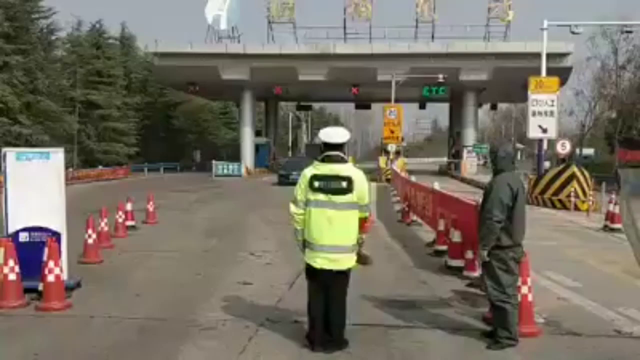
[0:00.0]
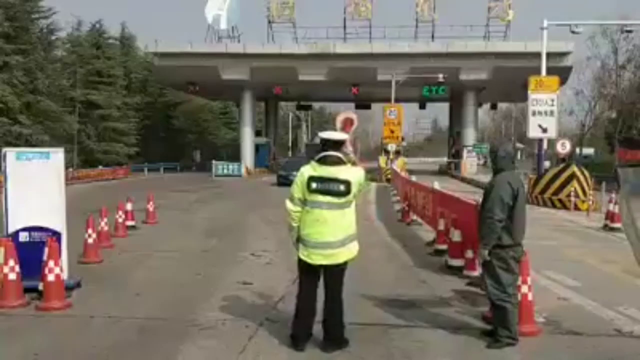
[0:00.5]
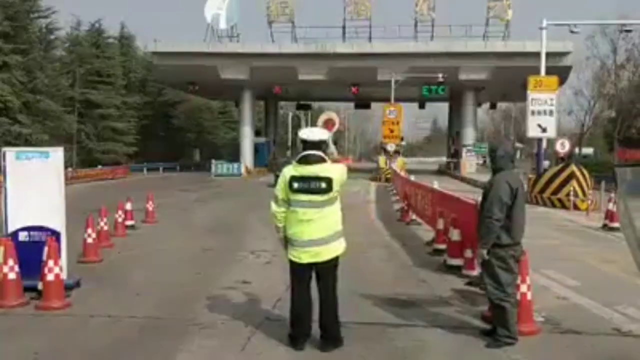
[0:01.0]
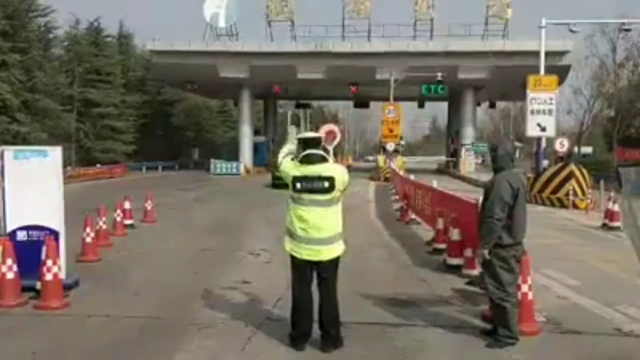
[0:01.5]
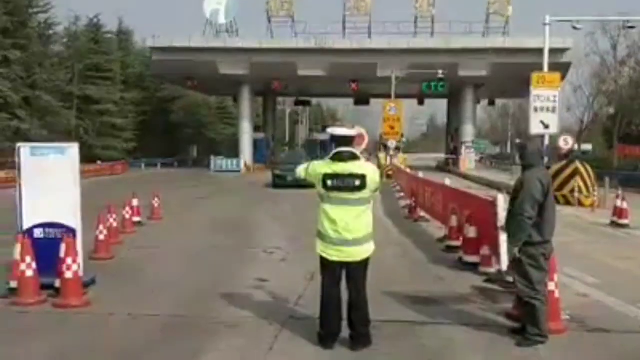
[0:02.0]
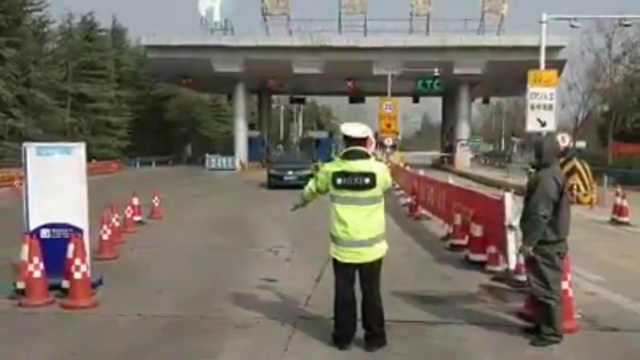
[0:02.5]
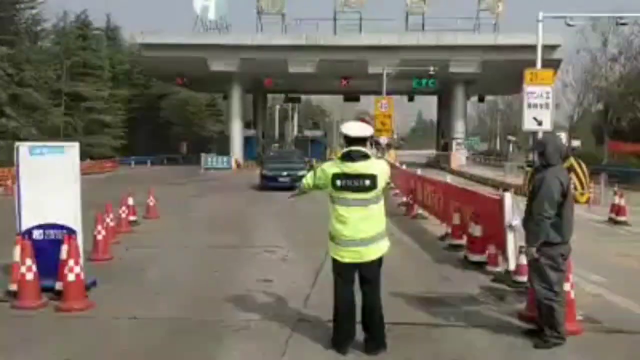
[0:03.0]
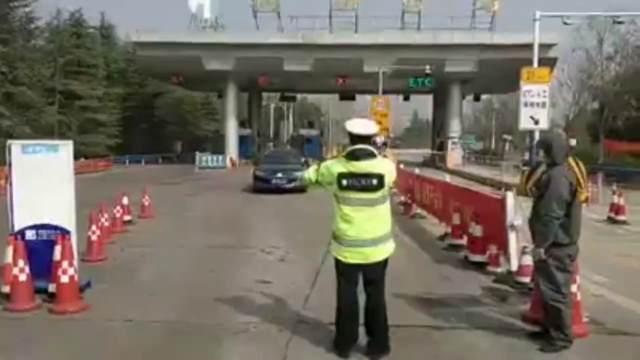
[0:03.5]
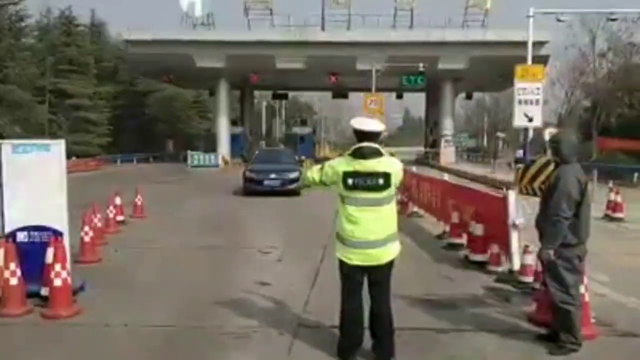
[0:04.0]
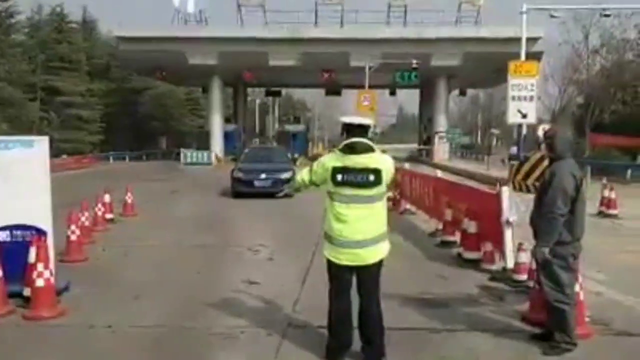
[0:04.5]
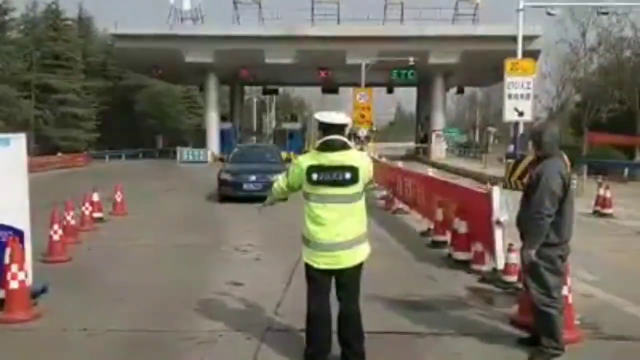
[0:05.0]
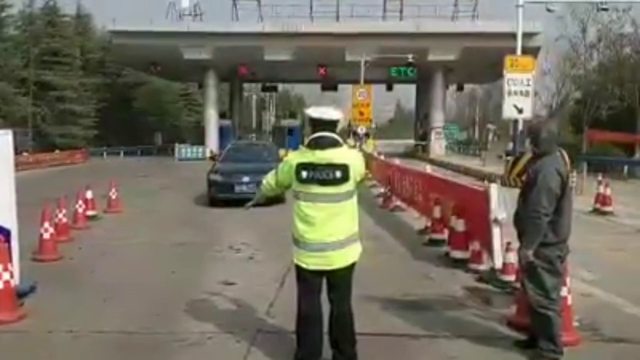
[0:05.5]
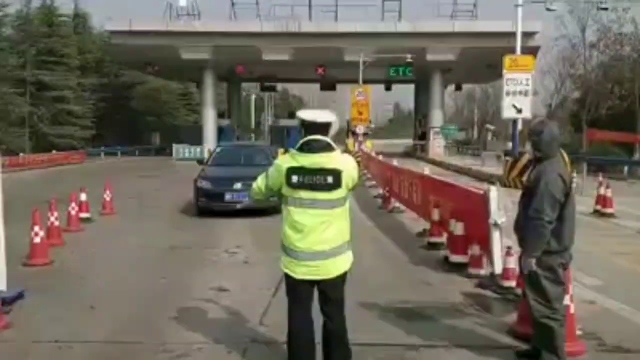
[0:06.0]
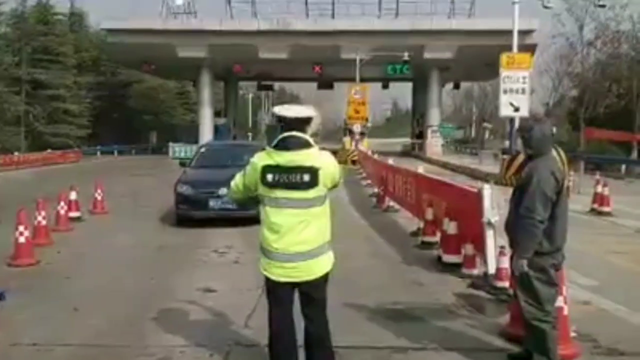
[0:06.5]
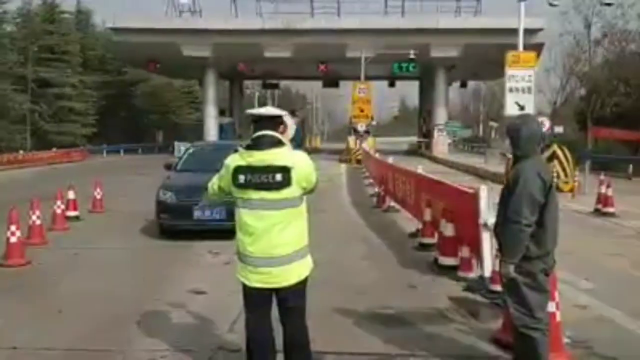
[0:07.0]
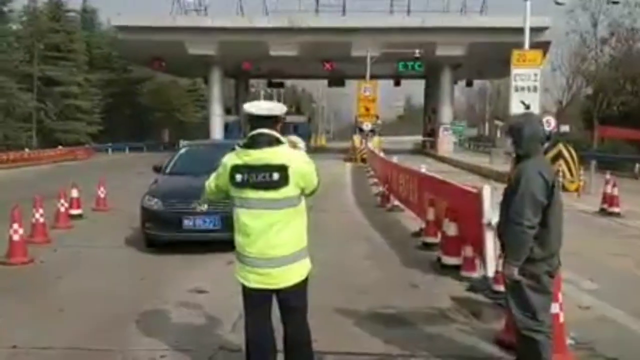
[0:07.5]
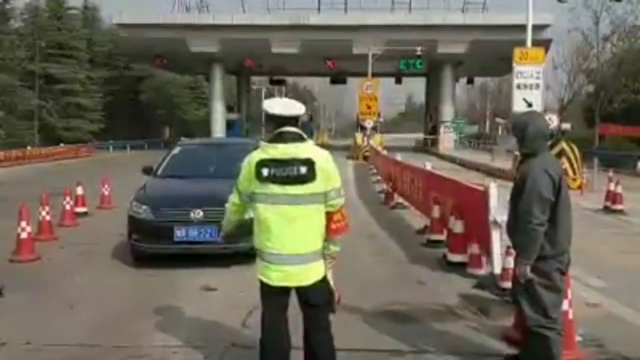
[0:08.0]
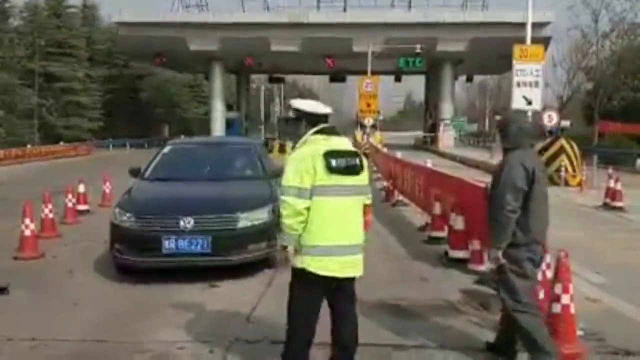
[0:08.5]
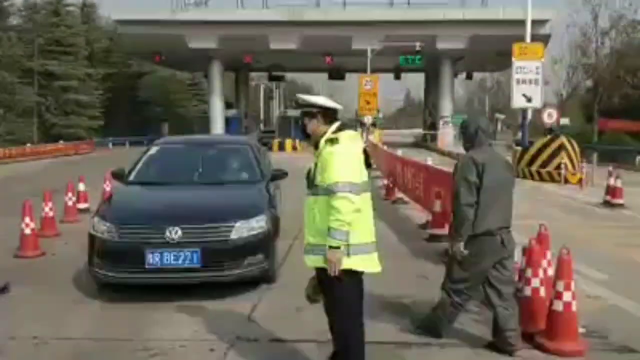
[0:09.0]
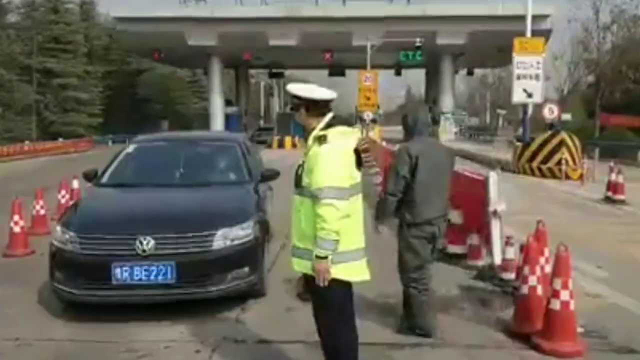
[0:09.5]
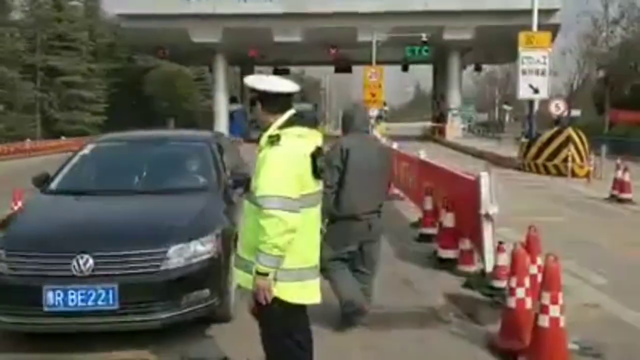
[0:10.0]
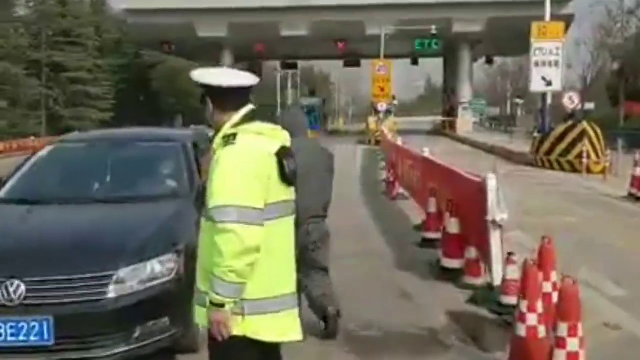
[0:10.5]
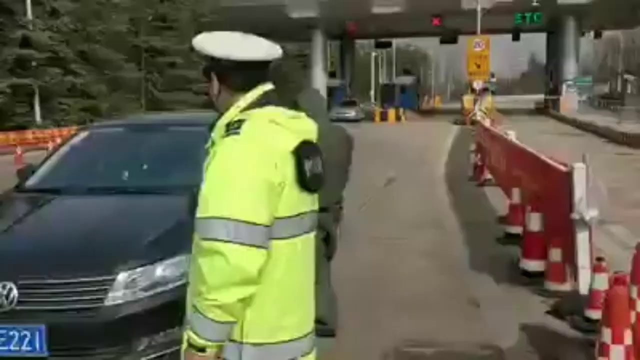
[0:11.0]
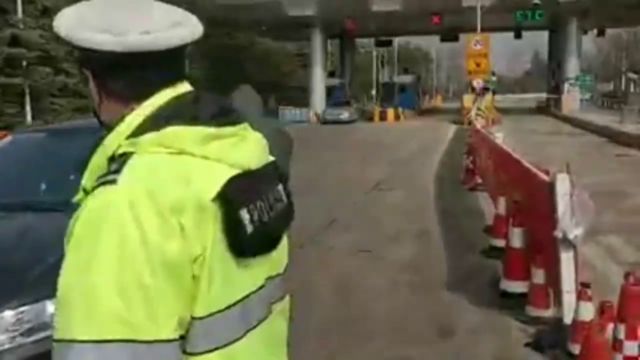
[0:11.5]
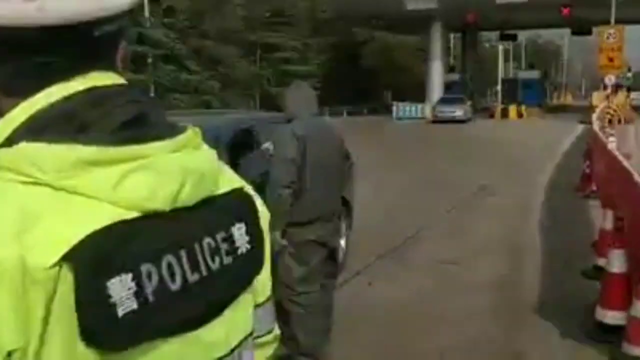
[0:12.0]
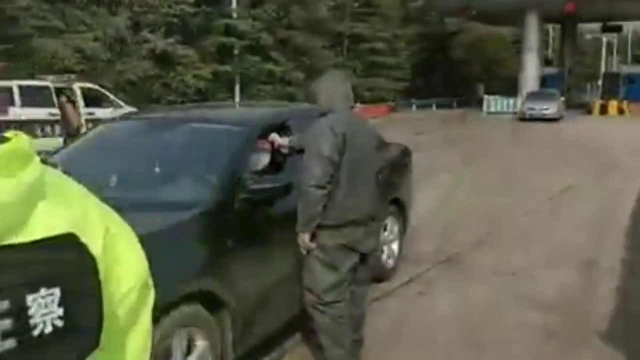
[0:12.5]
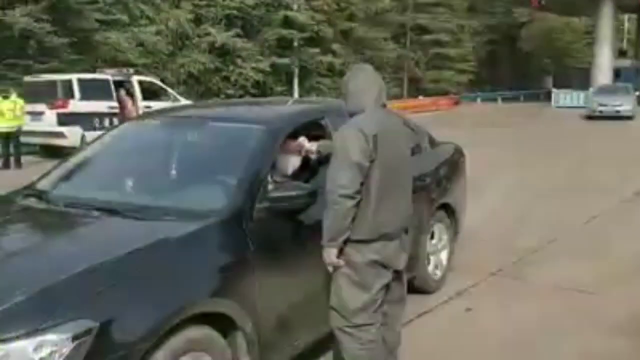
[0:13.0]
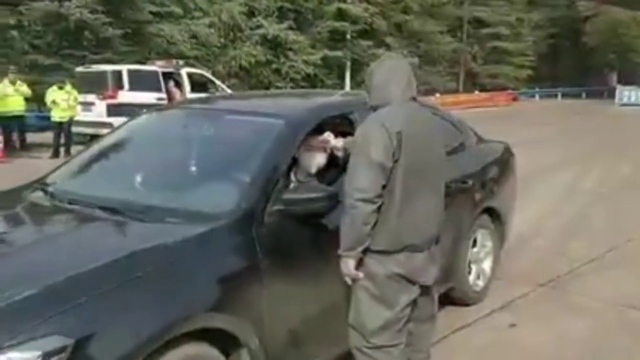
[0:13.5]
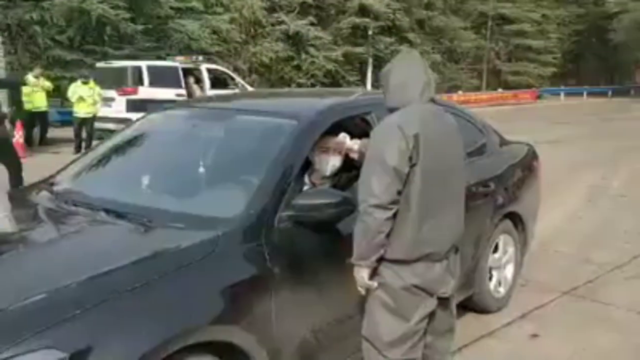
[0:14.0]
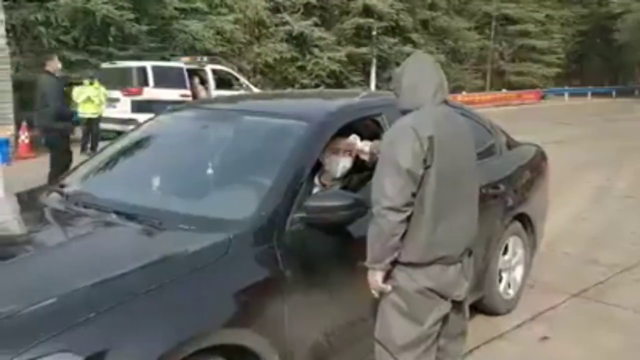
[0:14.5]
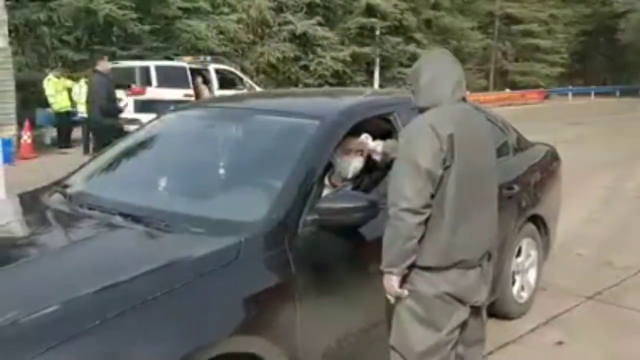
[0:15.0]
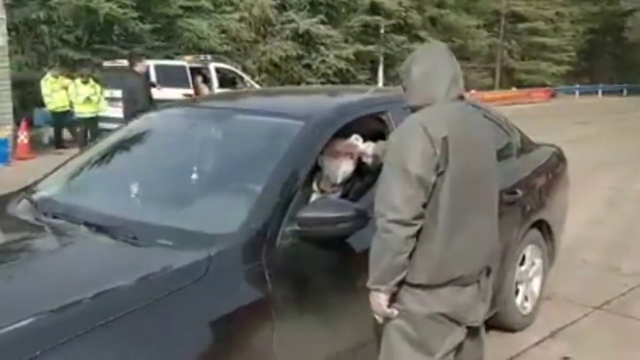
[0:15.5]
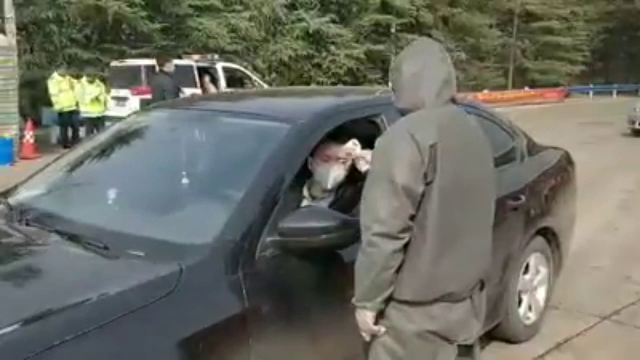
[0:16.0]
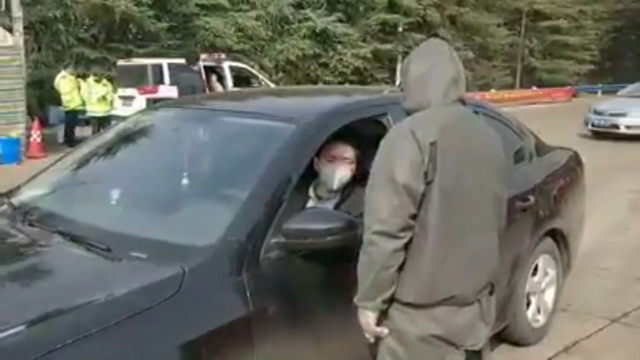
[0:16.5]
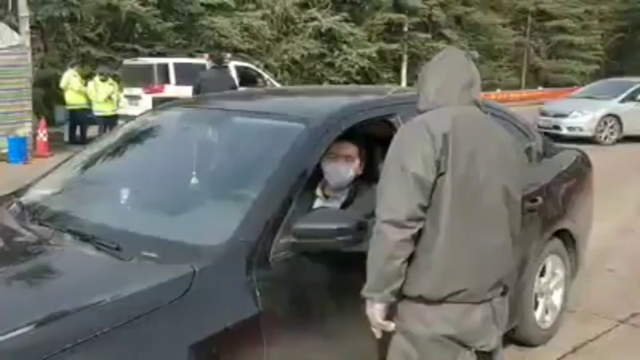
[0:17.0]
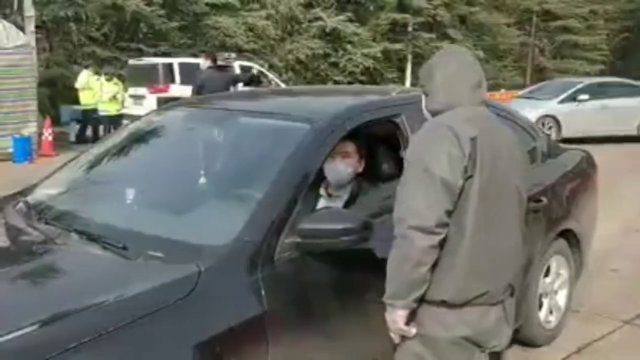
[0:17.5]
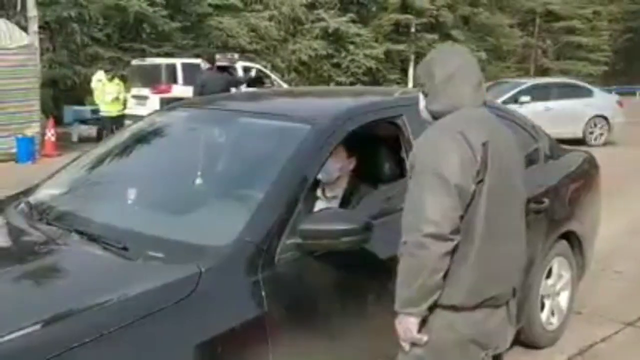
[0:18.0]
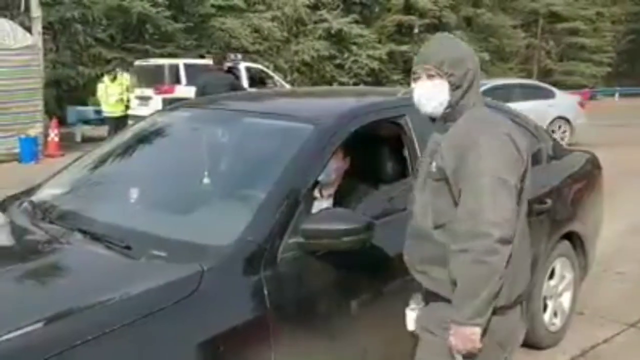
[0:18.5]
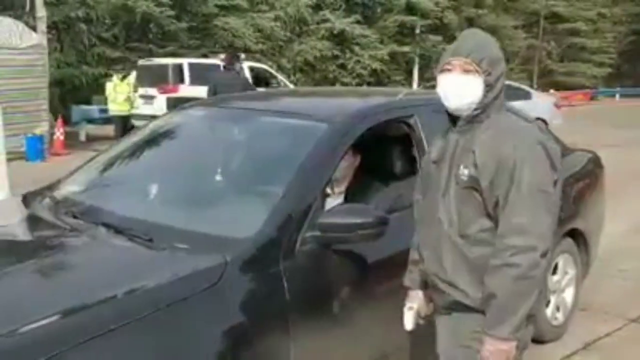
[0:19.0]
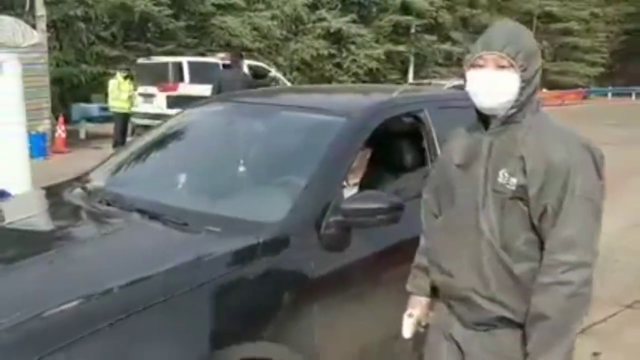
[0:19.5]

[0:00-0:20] An overpass with a toll booth appears, with some vehicles driving through. A man with a sign stands next to a row of cones, directing cars to stop after they exit the toll booth. A black VW car drives through the toll booth and comes to a stop, and a man approaches it. He wears a full-body gray suit that comes up over his head. He approaches the driver of the VW, who has a mask on, and puts a thermometer to the driver's head. He looks at the thermometer and then looks back over at the man holding the sign. There are several different street signs all around, many of them with Asian writing. It is a clear but overcast day with no rain. Trees line the road in the background, and there are stop and go lights at the top of the toll booth area.